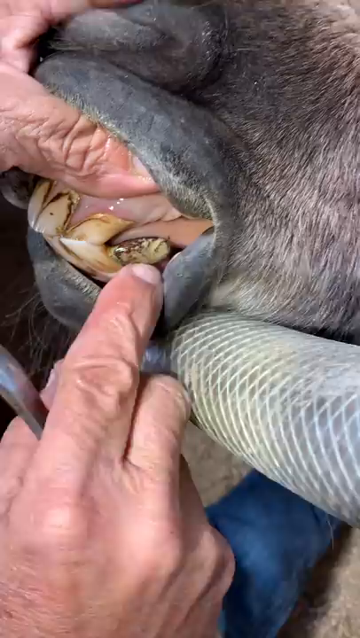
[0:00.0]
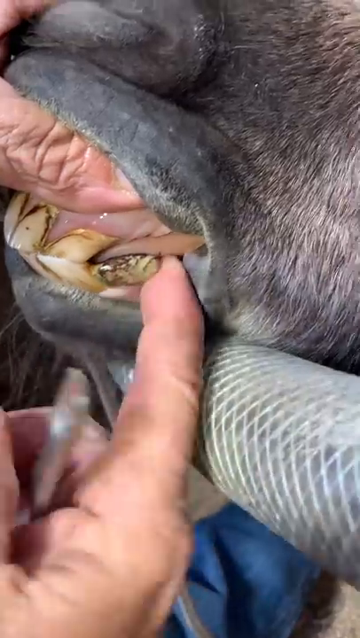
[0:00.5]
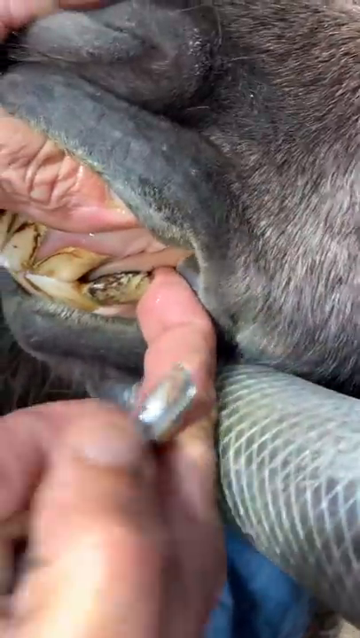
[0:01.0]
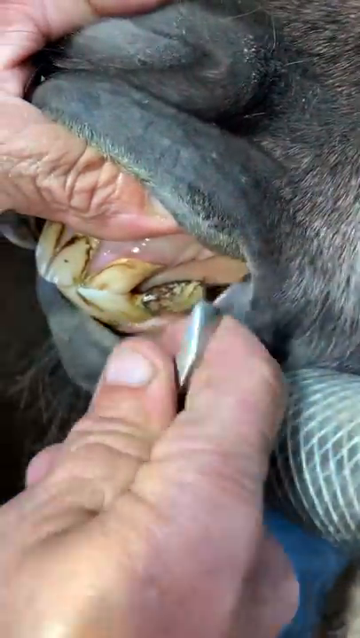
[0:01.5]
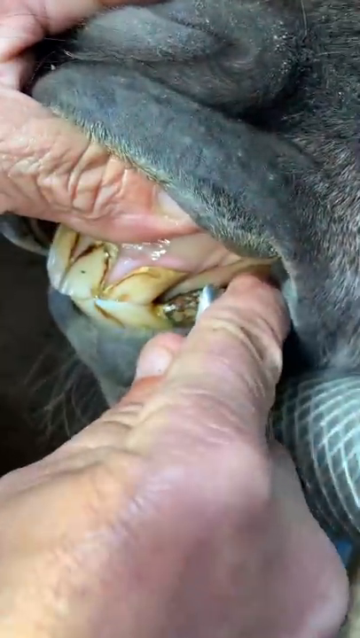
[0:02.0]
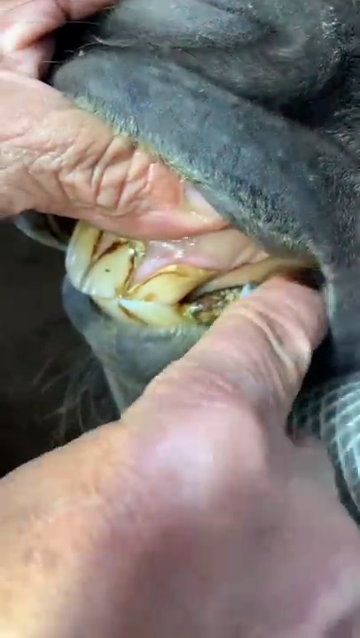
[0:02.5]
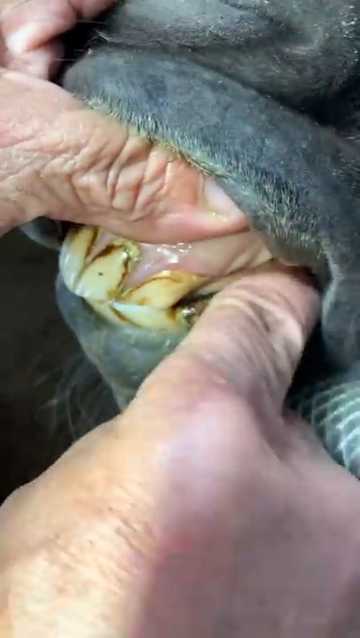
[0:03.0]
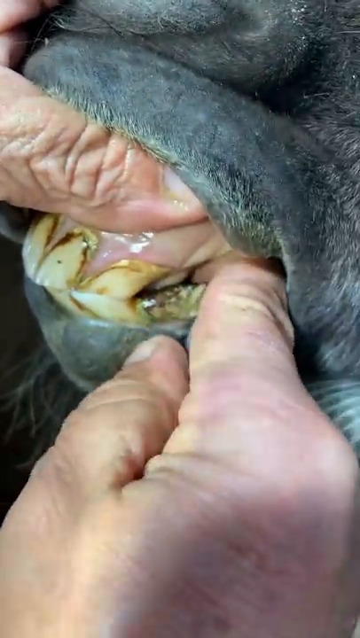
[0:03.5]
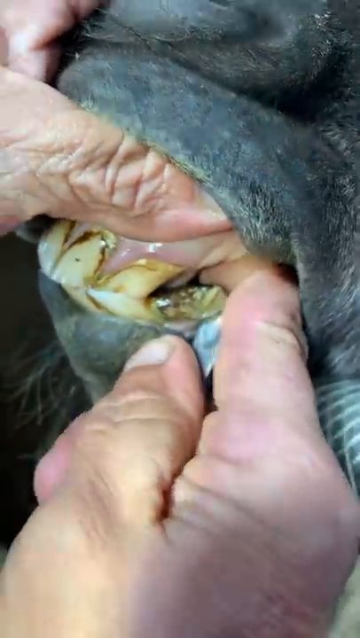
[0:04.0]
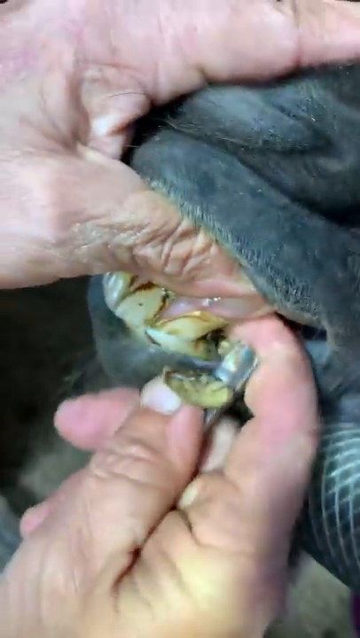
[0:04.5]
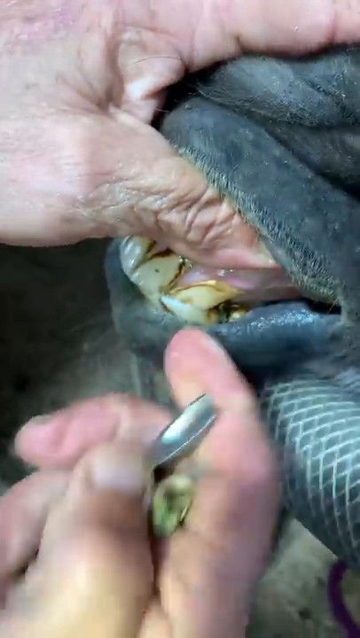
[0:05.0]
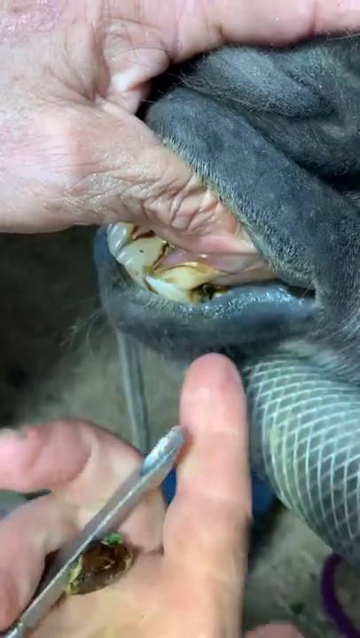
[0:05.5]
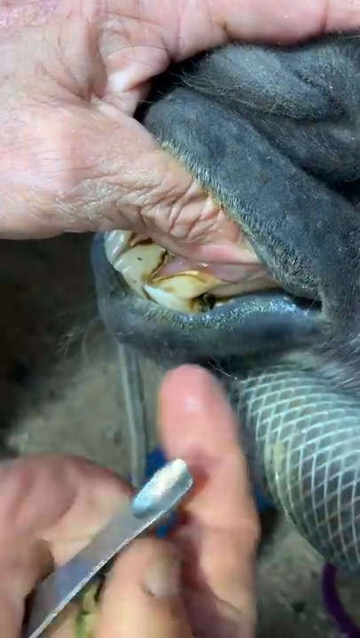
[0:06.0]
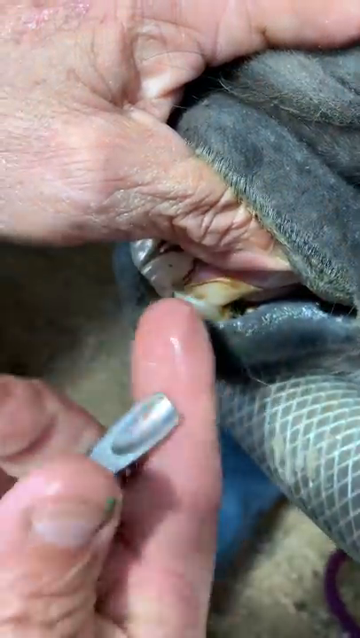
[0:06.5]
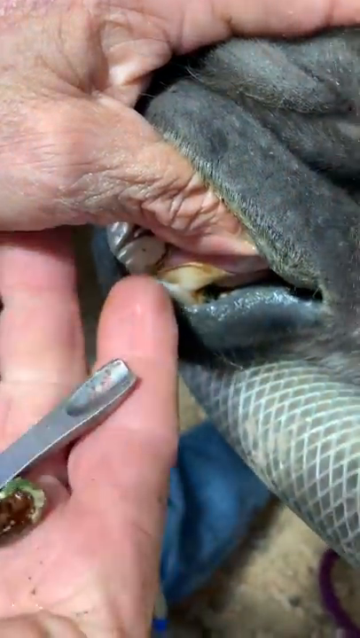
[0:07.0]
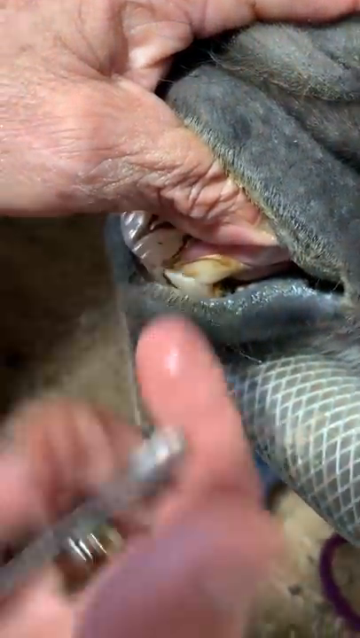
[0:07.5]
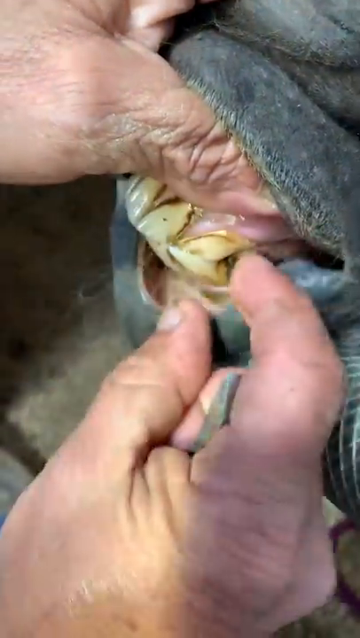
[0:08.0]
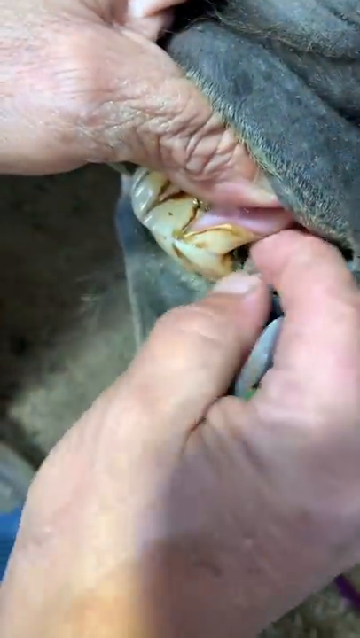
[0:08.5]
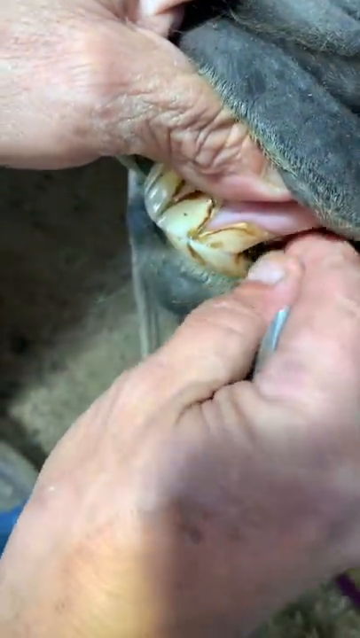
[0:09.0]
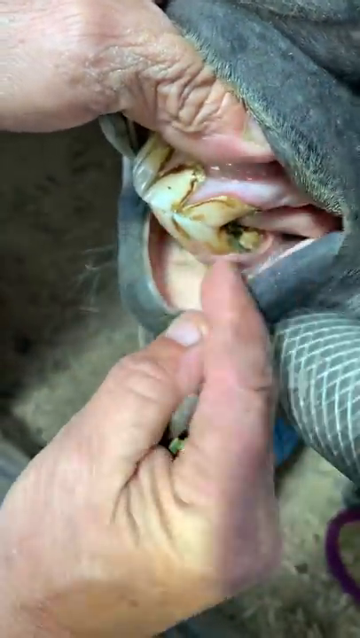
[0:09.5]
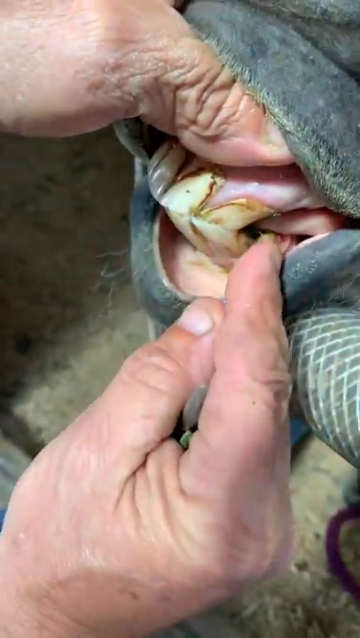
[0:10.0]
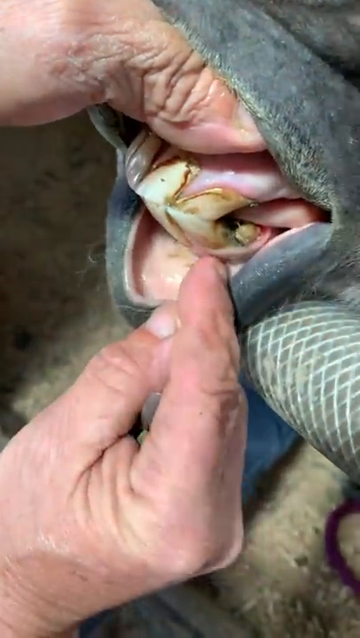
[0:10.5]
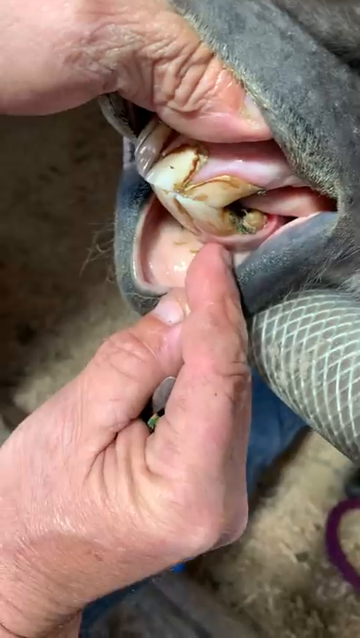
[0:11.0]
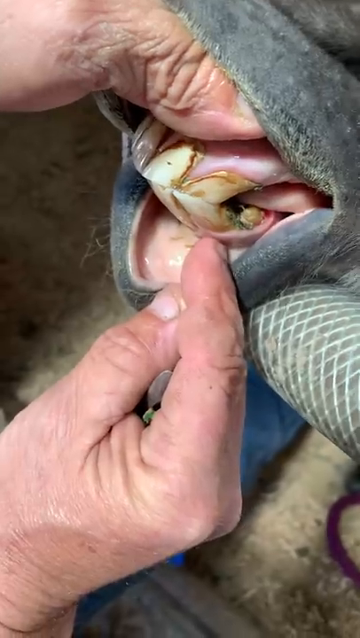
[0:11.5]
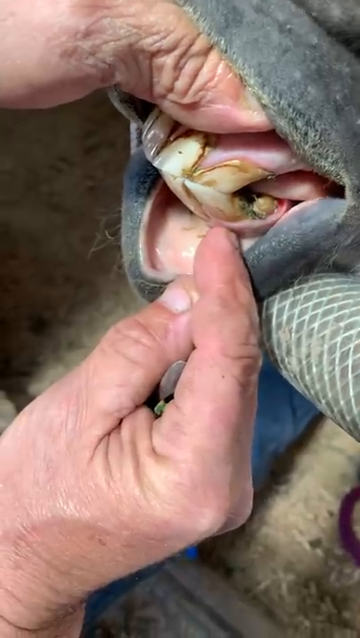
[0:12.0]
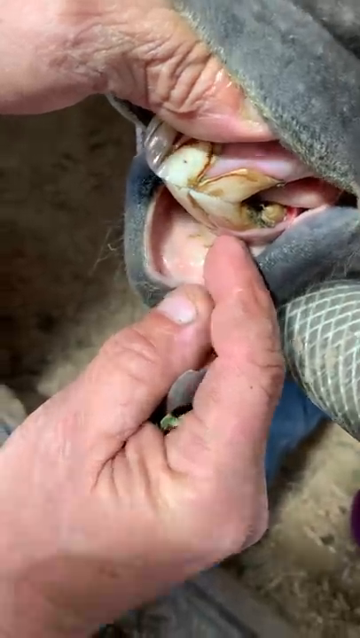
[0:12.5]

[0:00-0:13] Someone is taking tartar out of a horse's mouth. The main subjects are the human and the horse. The human holds the horse down to be able to take the tartar away from its mouth. The setting might be a local barn or perhaps a vet. The horse's mouth is a blackish color, and there seems to be a harness going around its head, as can be seen from what is underneath its mouth.